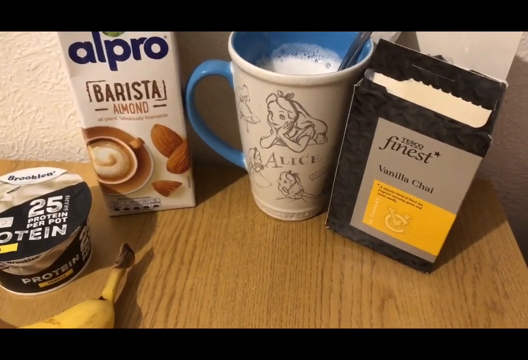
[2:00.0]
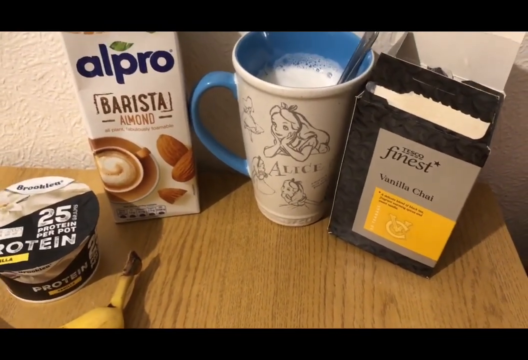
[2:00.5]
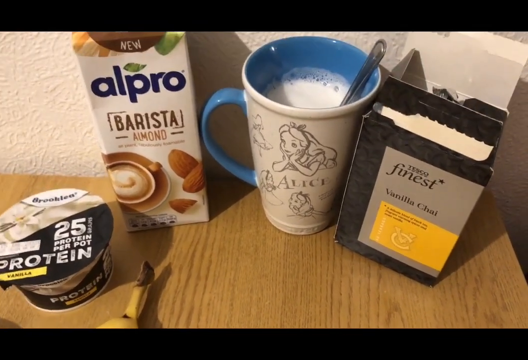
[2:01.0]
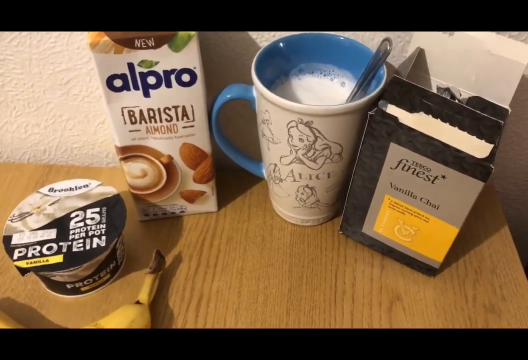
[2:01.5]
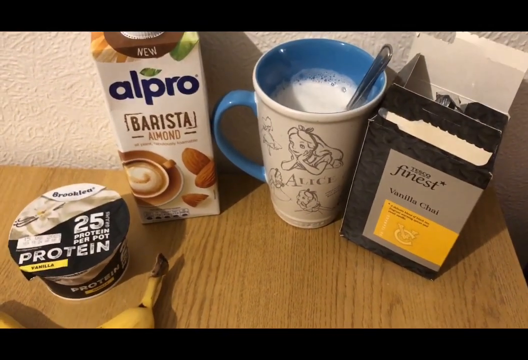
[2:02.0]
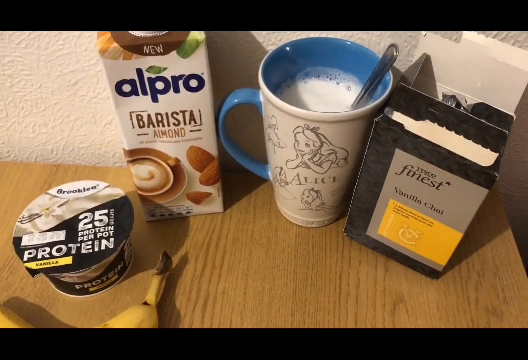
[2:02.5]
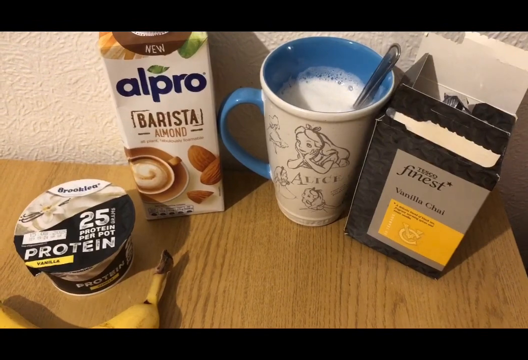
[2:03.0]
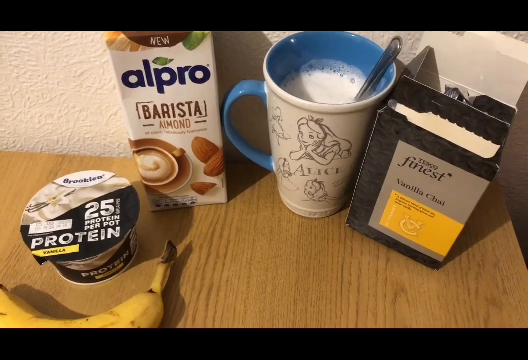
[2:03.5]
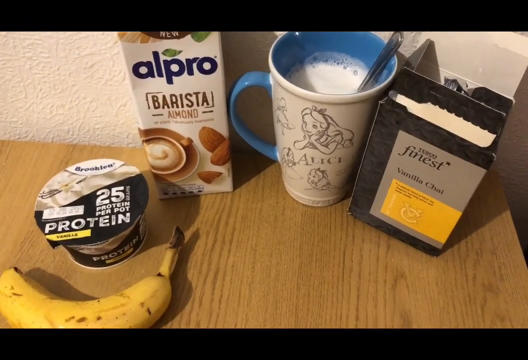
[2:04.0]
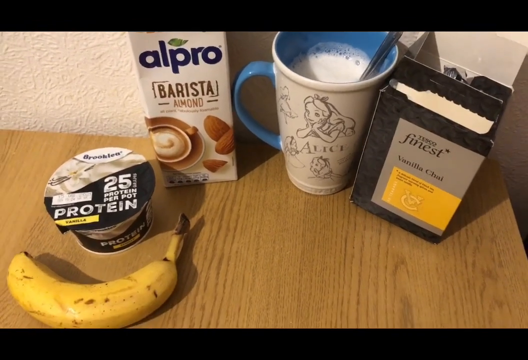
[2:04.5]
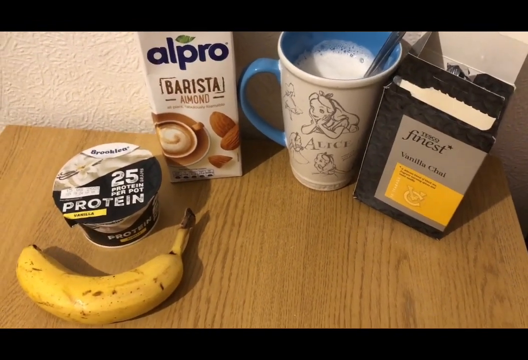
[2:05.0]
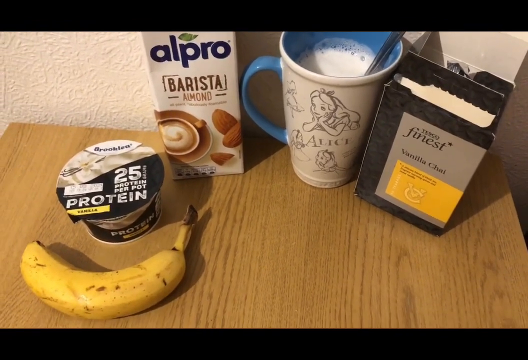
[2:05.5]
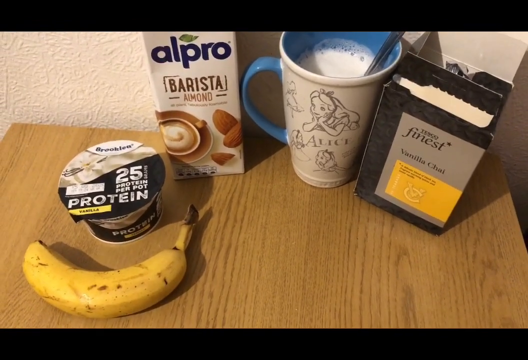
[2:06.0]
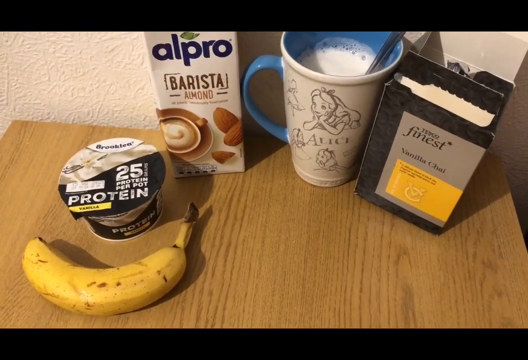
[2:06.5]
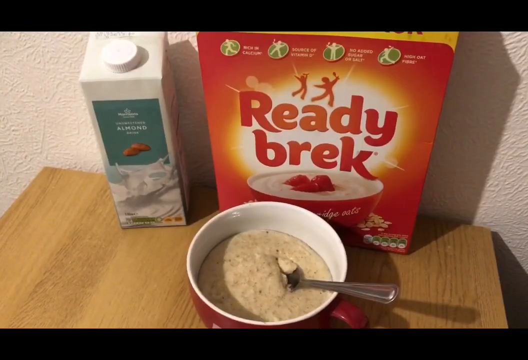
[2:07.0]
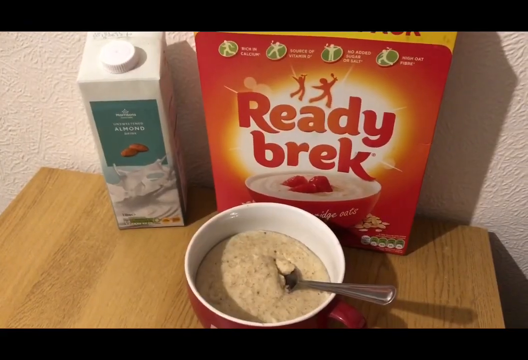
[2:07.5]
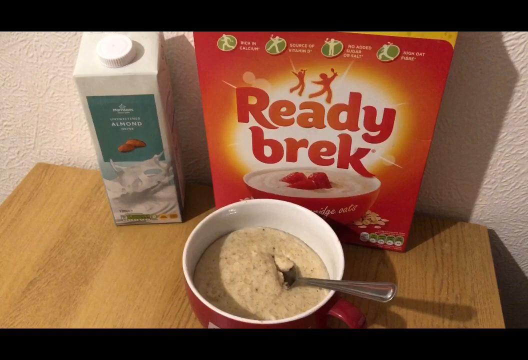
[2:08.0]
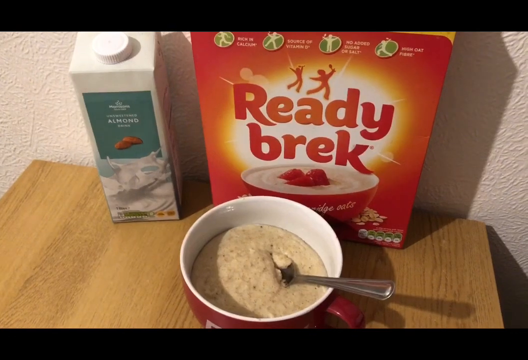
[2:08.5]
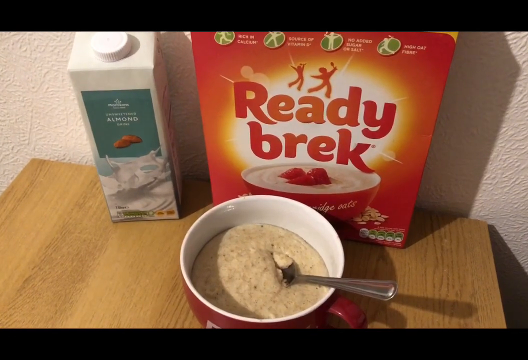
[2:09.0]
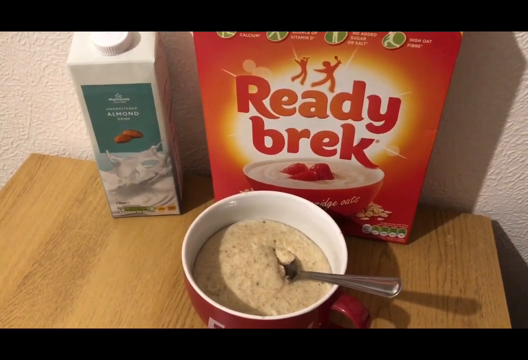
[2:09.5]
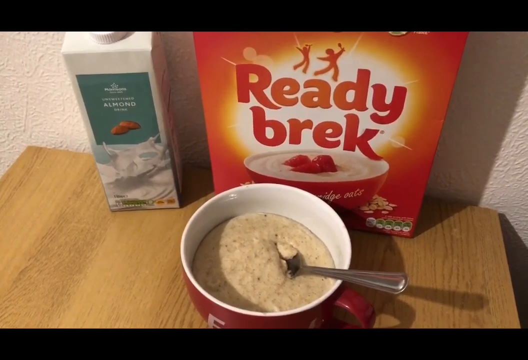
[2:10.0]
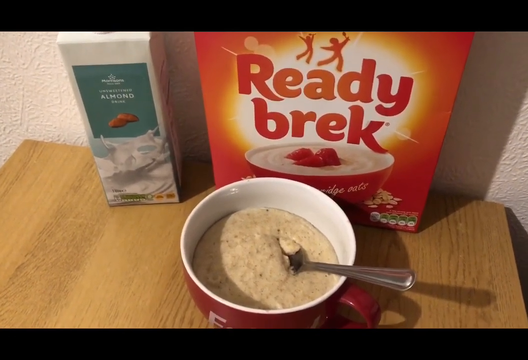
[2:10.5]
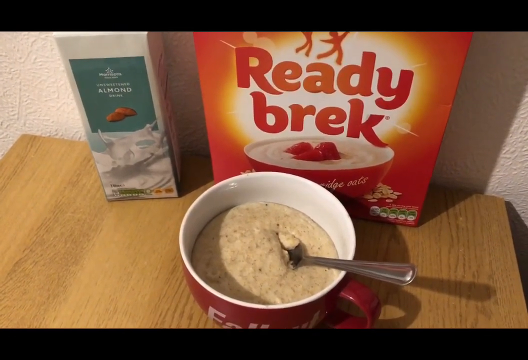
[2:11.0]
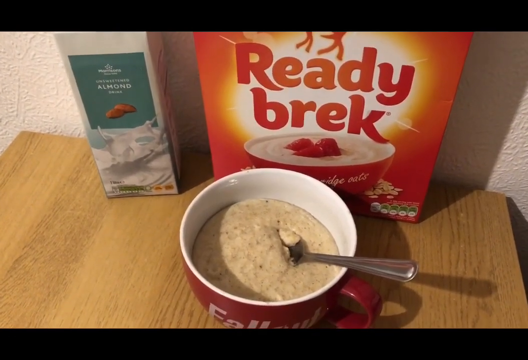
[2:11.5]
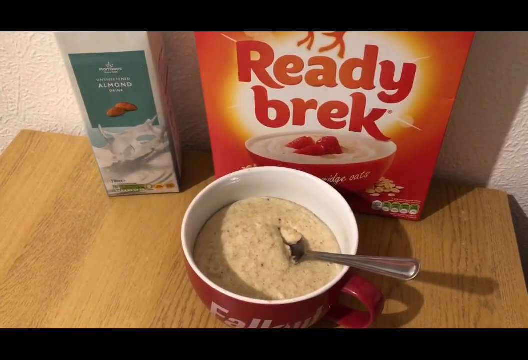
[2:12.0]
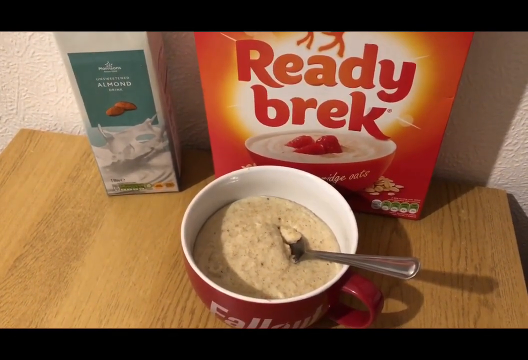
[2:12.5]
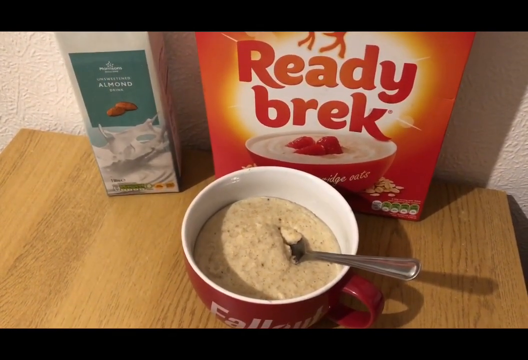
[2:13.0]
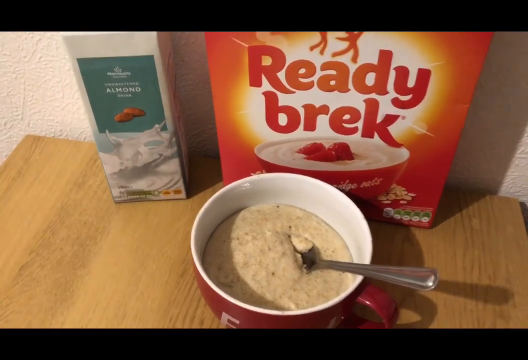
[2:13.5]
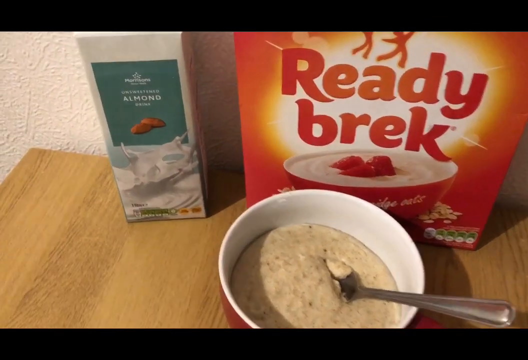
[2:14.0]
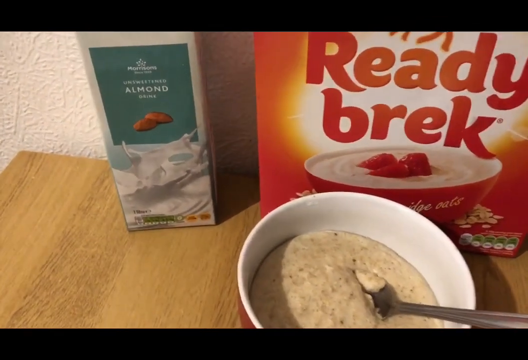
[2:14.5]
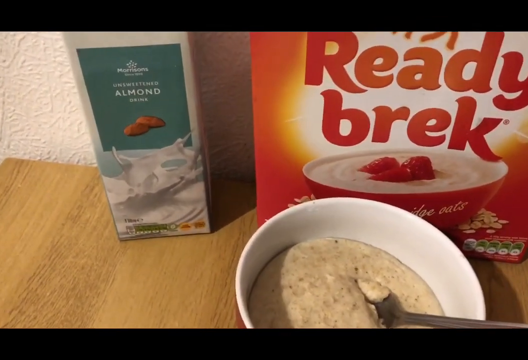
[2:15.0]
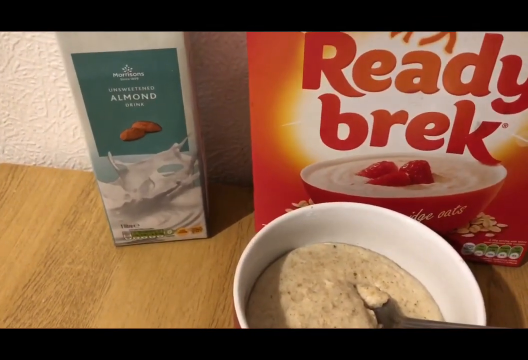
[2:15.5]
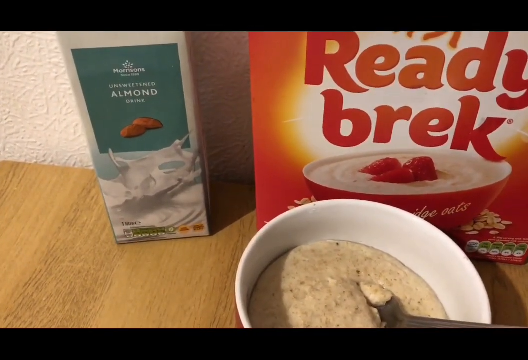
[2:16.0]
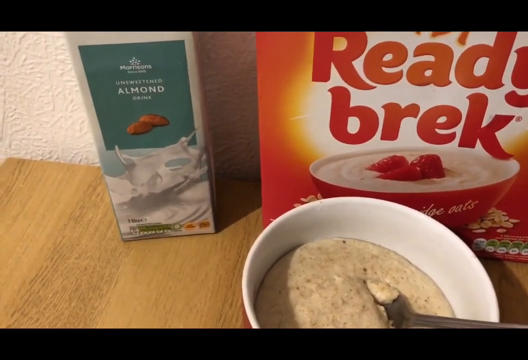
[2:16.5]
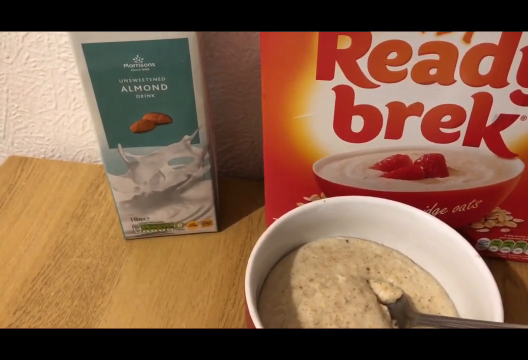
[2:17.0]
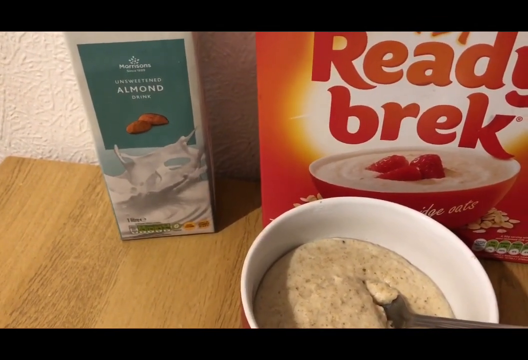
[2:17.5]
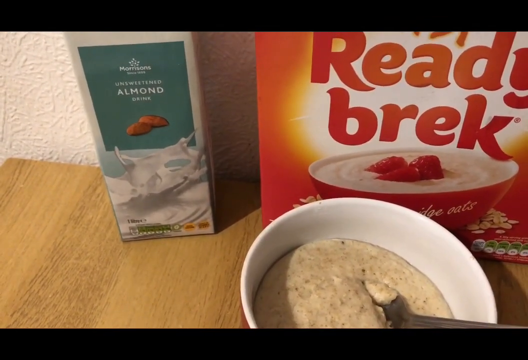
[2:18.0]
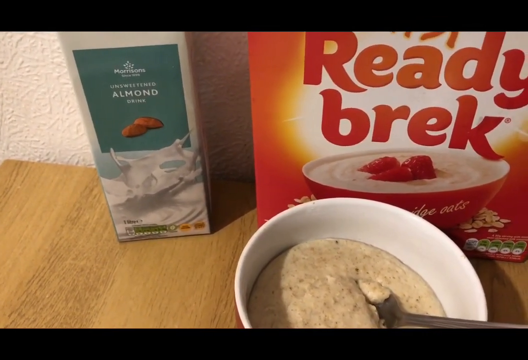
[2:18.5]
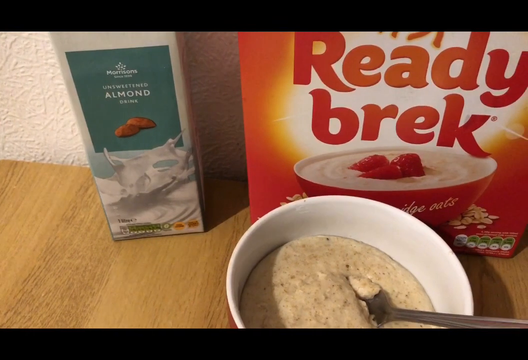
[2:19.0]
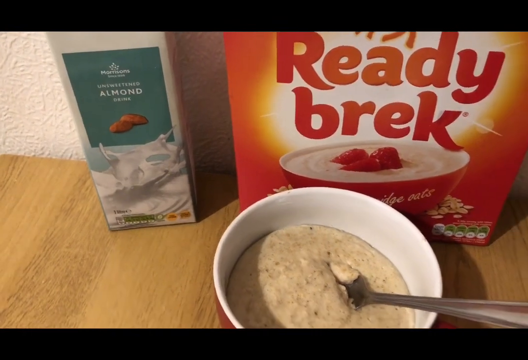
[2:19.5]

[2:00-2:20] A person films down at a light brown wooden table. On the right is a tall, small black box that says "Finest Vanilla Chai." To its left is a tall cream-colored mug with drawings of Alice from Alice in Wonderland, a blue handle and blue interior, almost filled to the top with a thick white liquid, with a silver spoon resting on the right side inside the cup. To the left of that is a tall rectangular container of Alpro Barista Almond with images of almonds and something like a cup of coffee on the front. To the left of that is a cup of Brooklea yogurt whose top is roughly half white and half black, saying "25 protein per pot," with a yellow rectangular box that says "vanilla." In front of the yogurt a yellow banana lies on its side with its peel on. The scene changes to the same table: on the left is a tall light green rectangular box container of almond milk with a green label that says "unsweetened almond milk" in white font, a picture of two almonds, and underneath something like a cup of the milk splashing. To its right is a large red box that says "Ready Brek," with a picture of a red bowl of cream-colored food that looks like oats topped with red raspberries. In front of the box is a large red cup with a white interior holding a tan creamy bowl of oats with small brown specks, with a silver spoon inside, mostly covered by the oats. The camera sort of zooms in on the oats, then zooms in on the almond milk container.